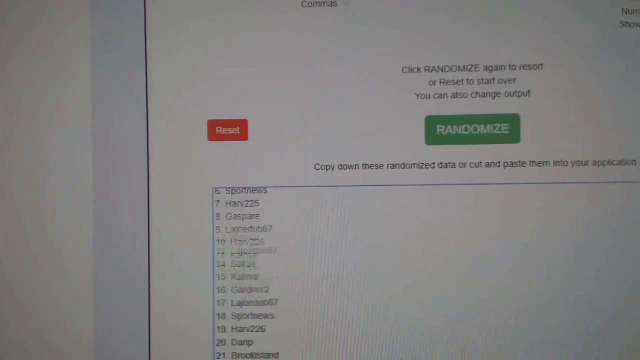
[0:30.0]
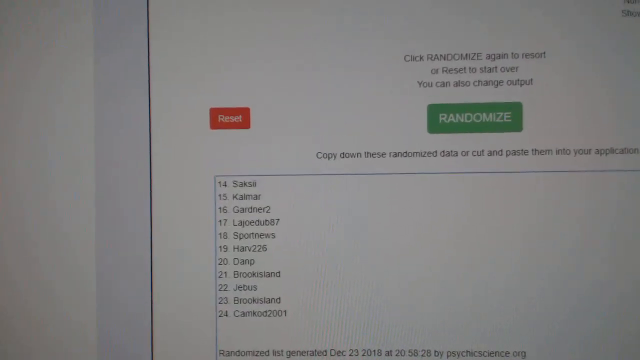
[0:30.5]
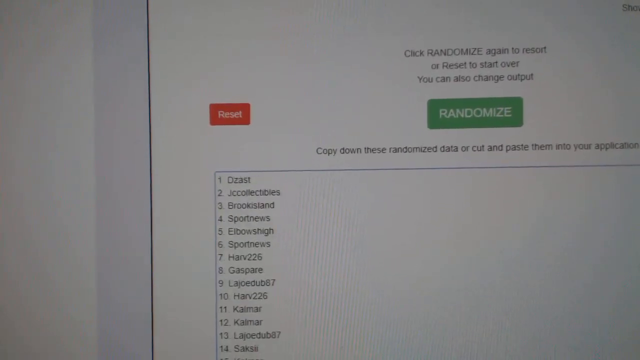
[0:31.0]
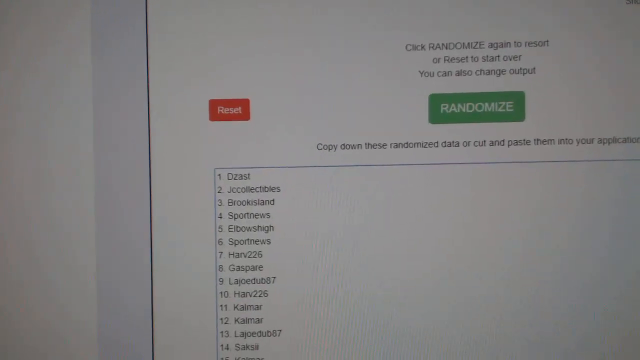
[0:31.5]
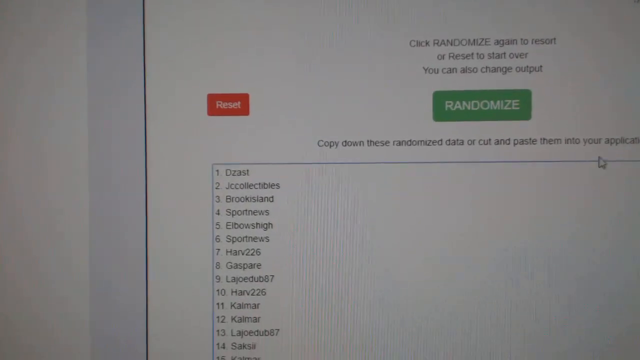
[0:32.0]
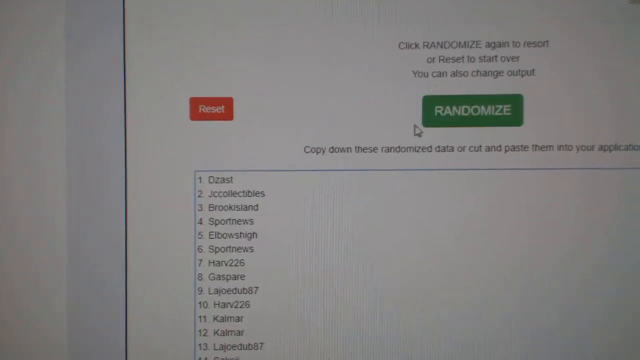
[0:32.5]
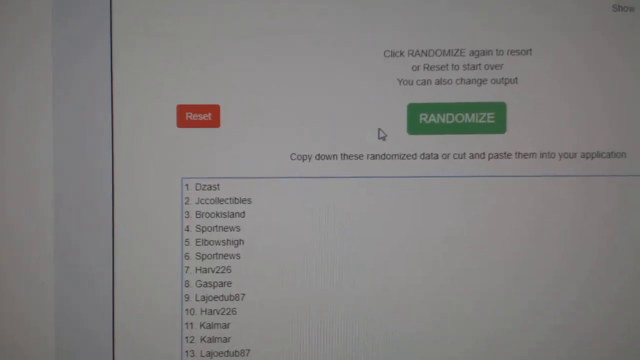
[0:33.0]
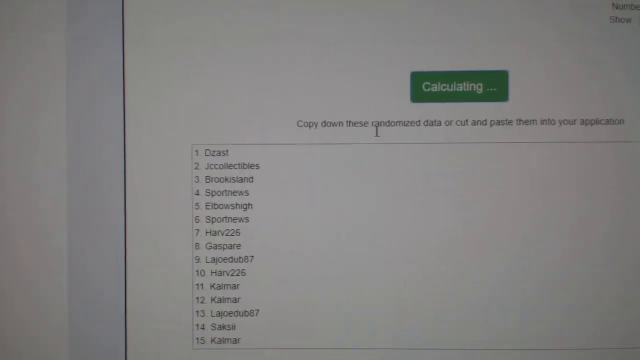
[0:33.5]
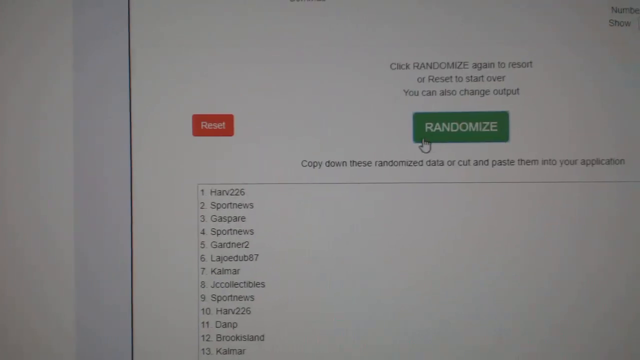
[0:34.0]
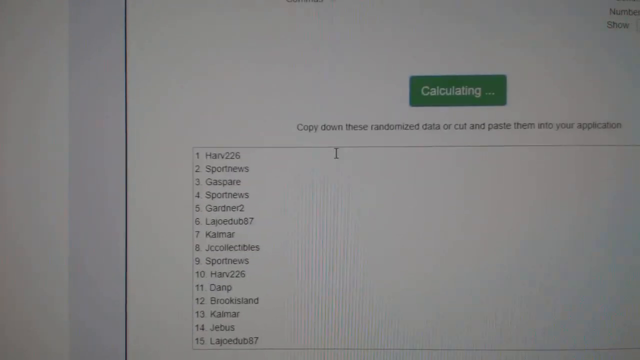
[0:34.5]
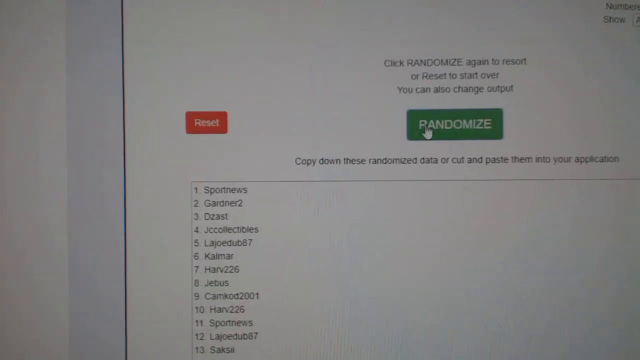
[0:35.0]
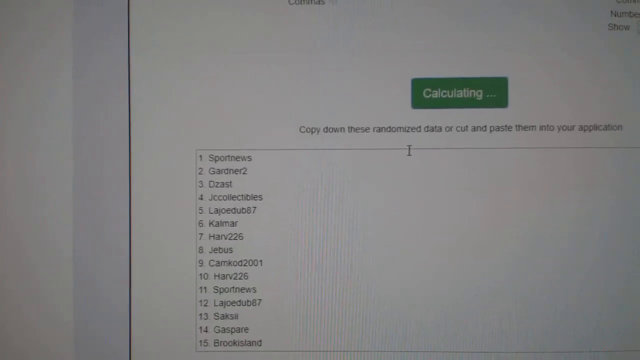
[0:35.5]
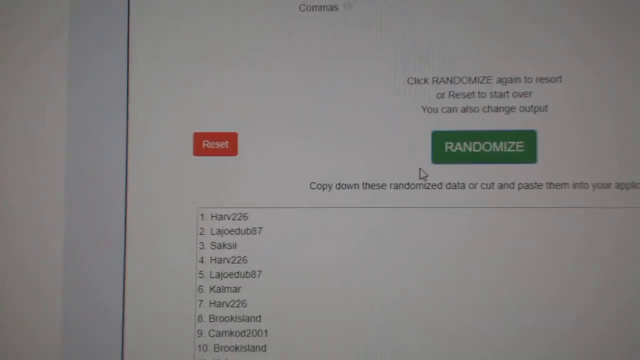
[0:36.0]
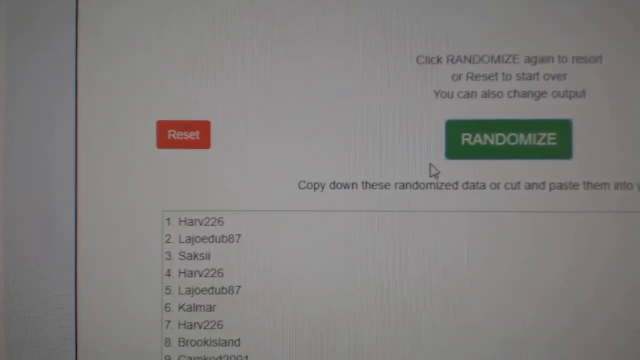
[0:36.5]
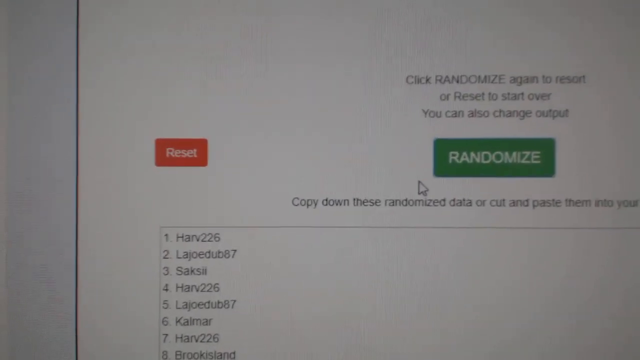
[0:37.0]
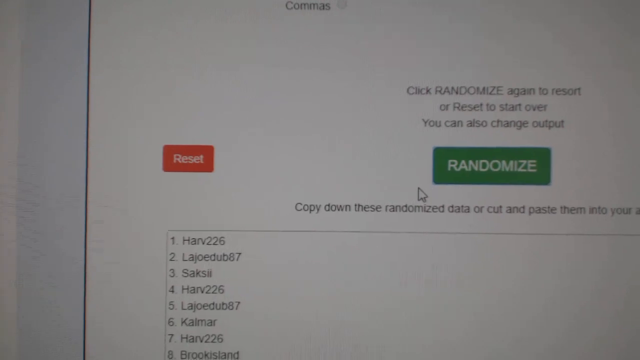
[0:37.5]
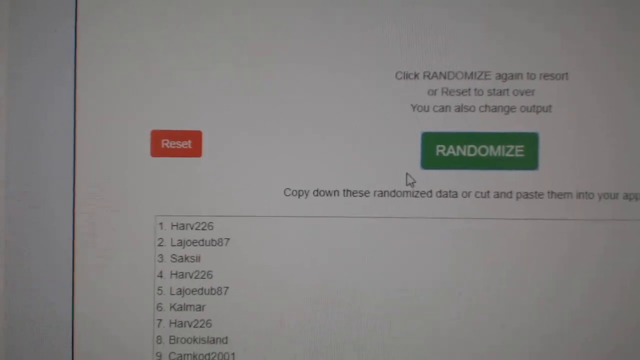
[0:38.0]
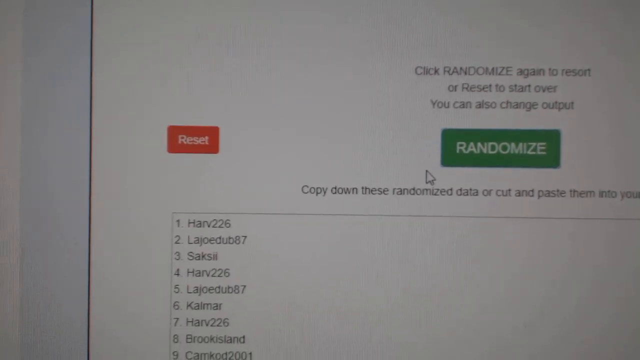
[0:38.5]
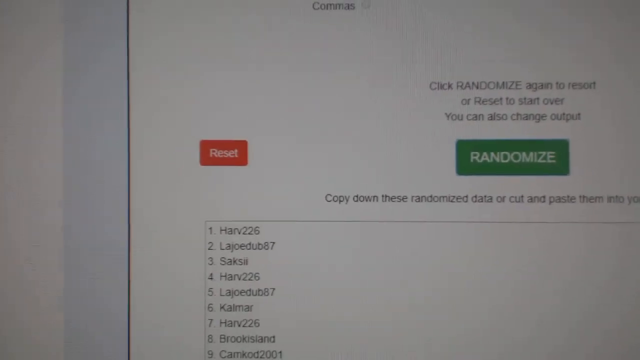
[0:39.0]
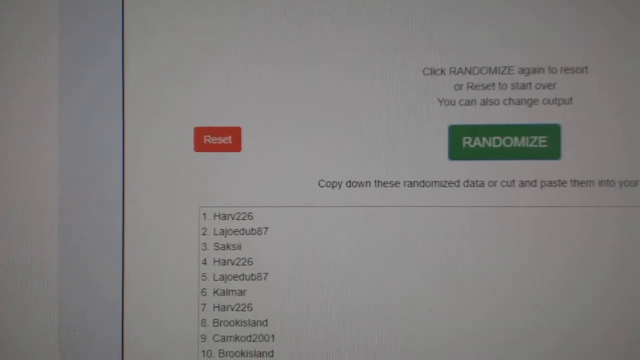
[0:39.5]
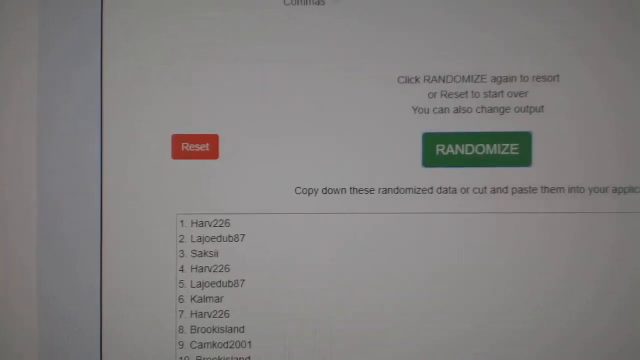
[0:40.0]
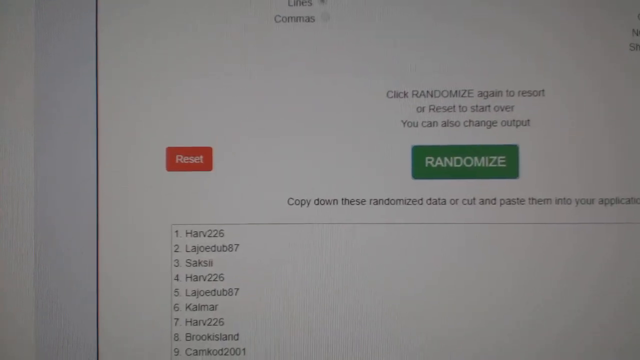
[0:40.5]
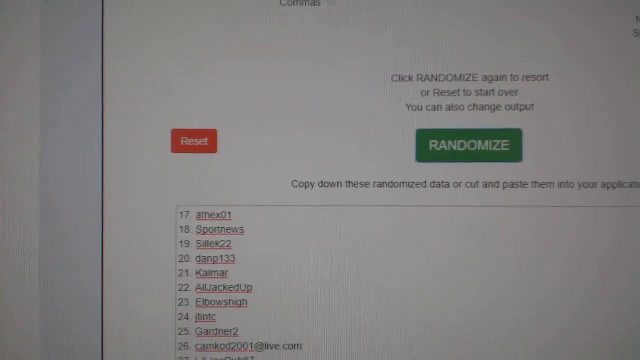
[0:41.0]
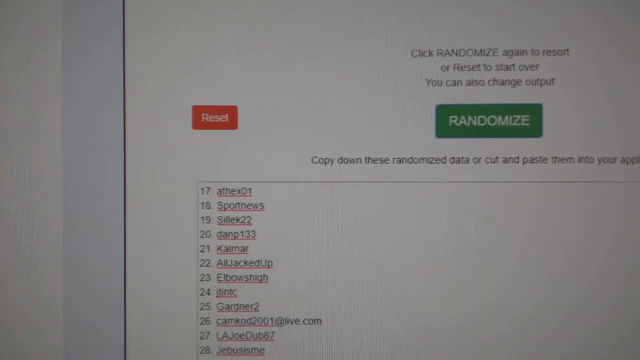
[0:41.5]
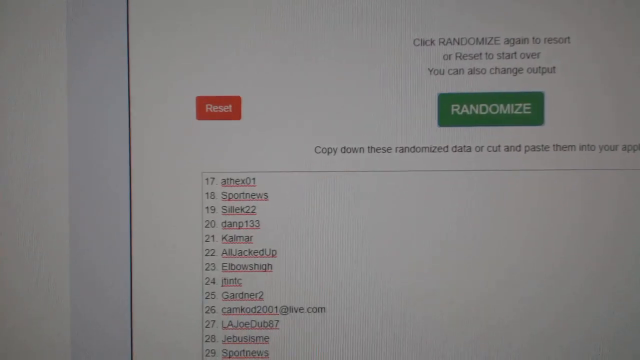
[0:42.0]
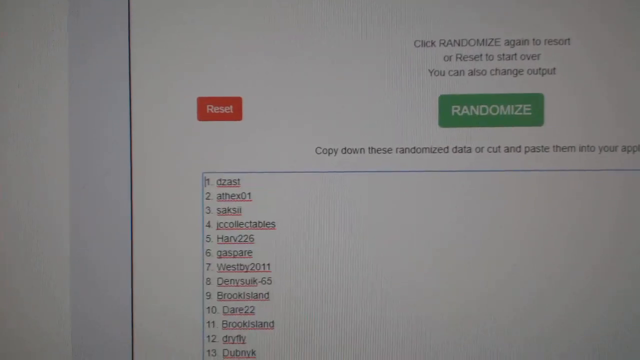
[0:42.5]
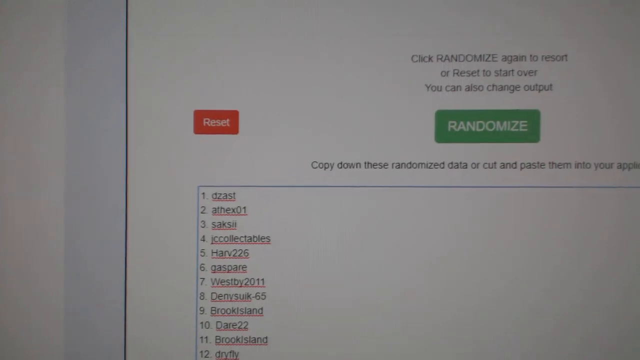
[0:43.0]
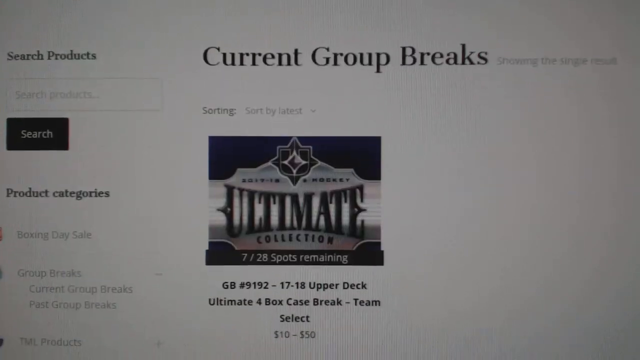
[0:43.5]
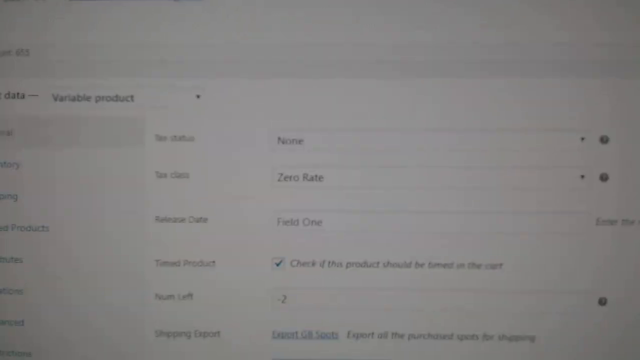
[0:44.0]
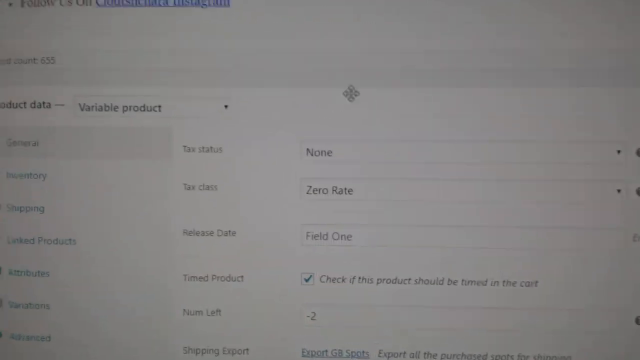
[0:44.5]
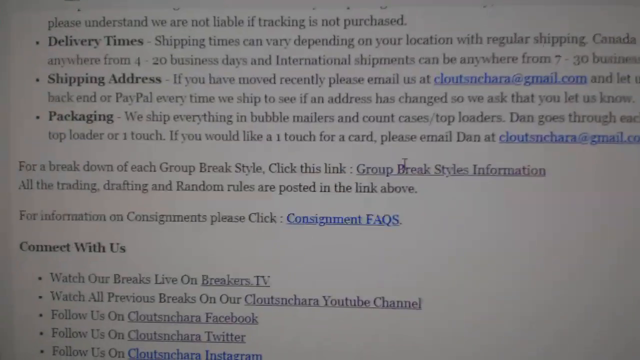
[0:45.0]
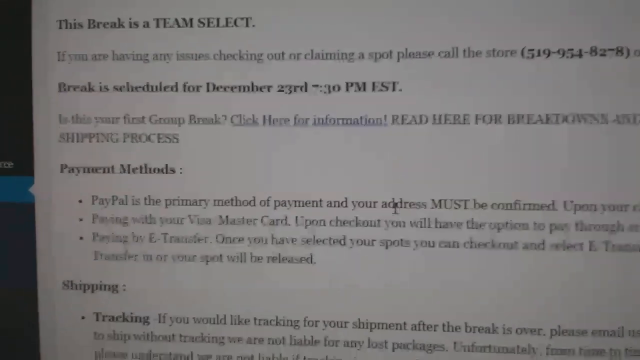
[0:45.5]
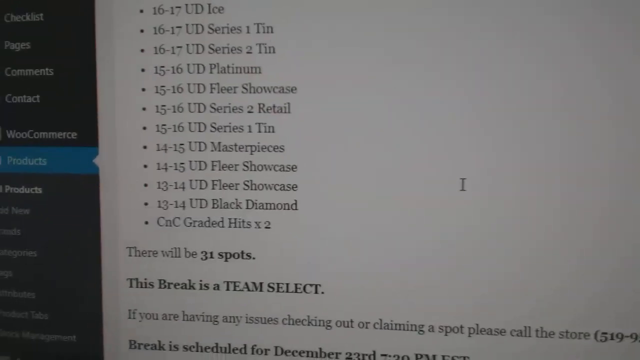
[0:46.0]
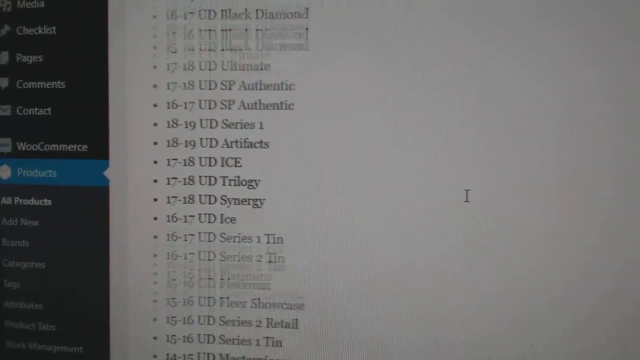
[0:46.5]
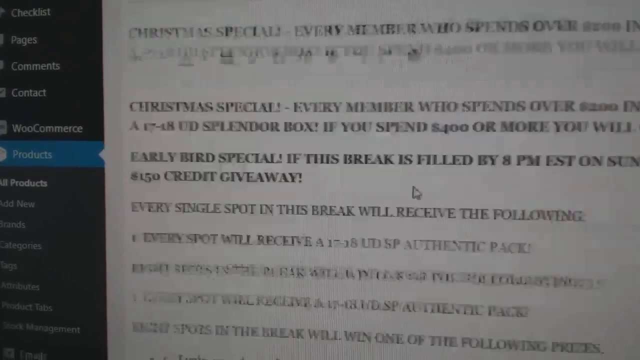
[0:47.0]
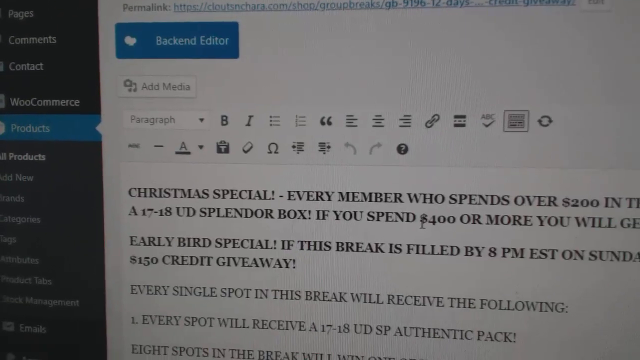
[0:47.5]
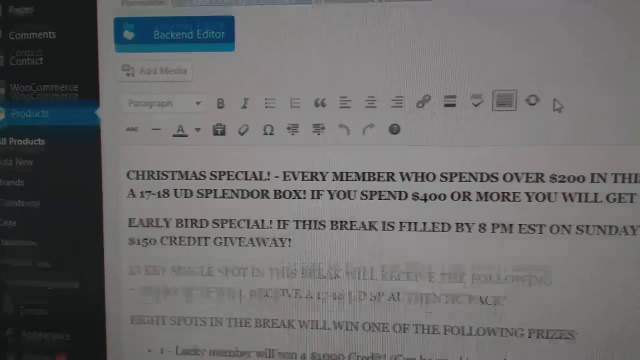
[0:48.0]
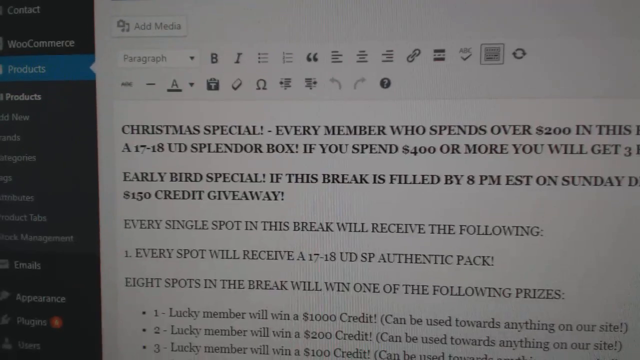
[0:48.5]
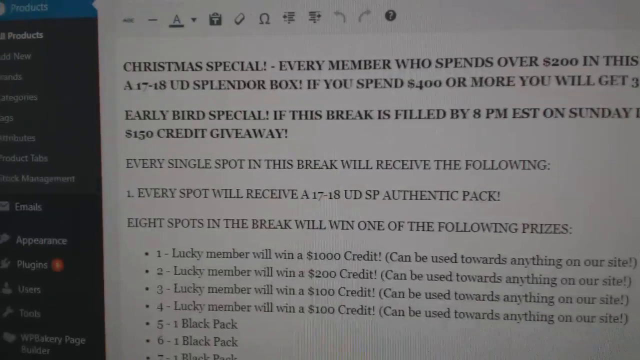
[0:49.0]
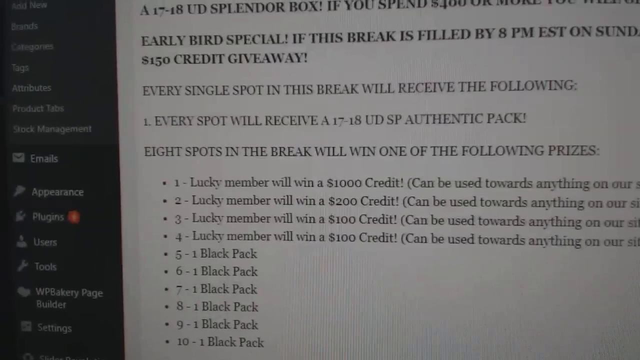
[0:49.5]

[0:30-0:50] Very grainy footage, filmed with some kind of device, shows a computer screen. The page has a green button with "randomize" in white text in the middle, and on the left side "reset" appears in a red rectangle. Black text reads "click randomize again to resort, or reset, start over. You can also change output." The person keeps clicking randomize, moving the mouse away and back to the button each time. Unidentifiable items appear on the right-hand side. The view then moves to a page with a lot of hard-to-read text, including "Christmas special, every member who spends over". The footage is shaky and confusing.